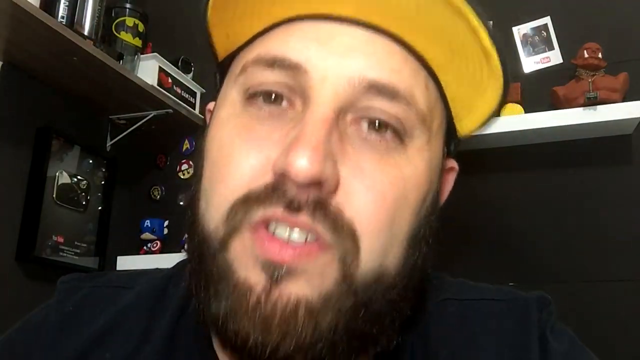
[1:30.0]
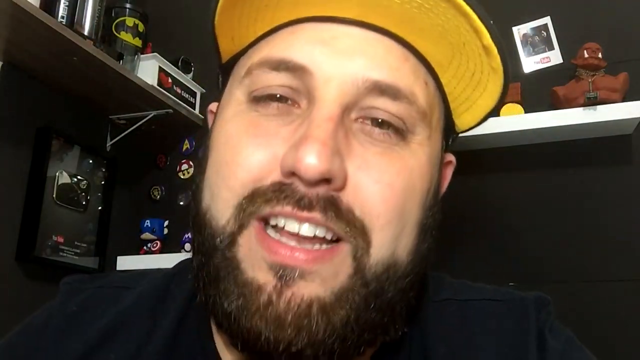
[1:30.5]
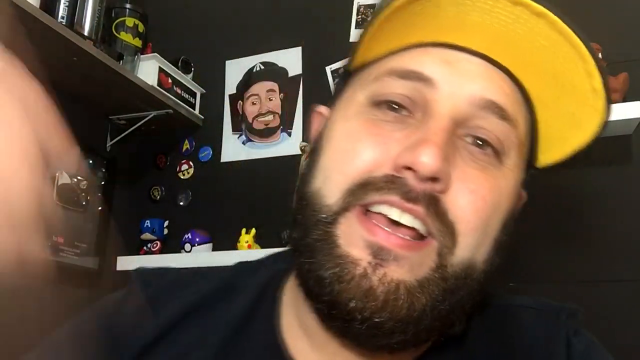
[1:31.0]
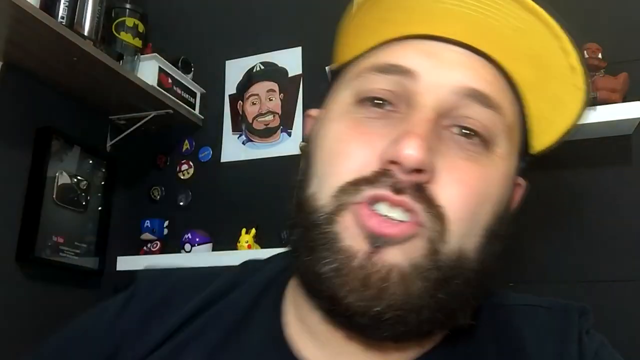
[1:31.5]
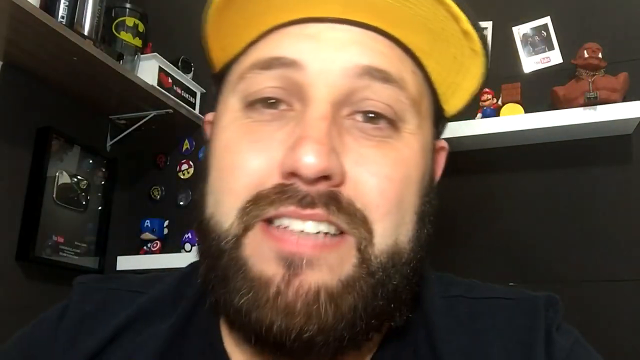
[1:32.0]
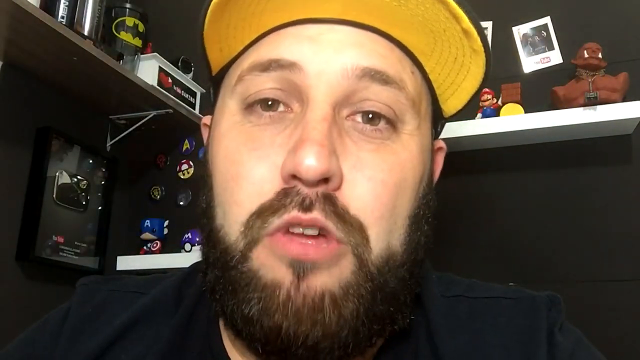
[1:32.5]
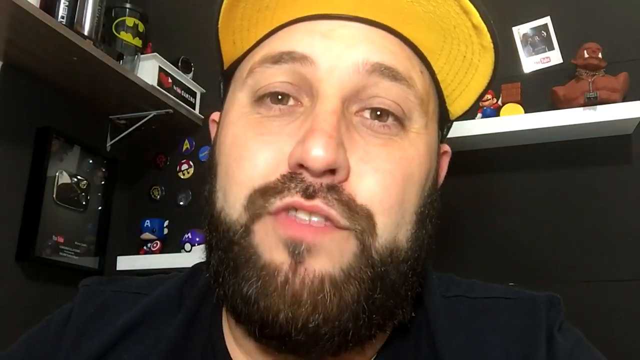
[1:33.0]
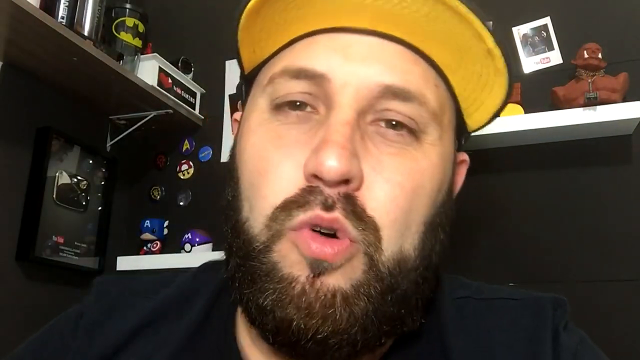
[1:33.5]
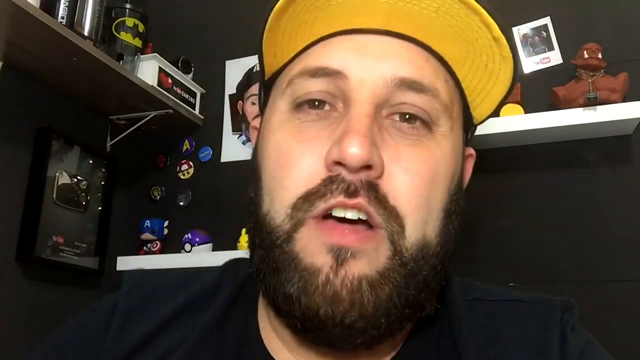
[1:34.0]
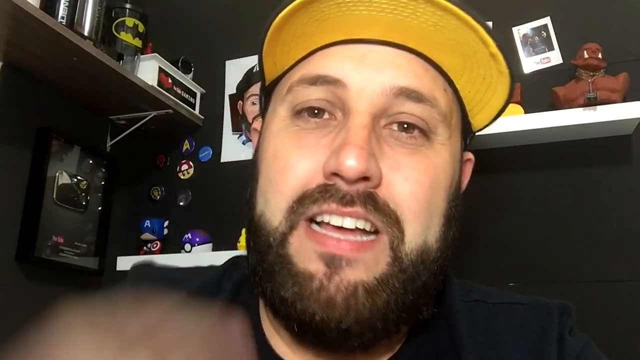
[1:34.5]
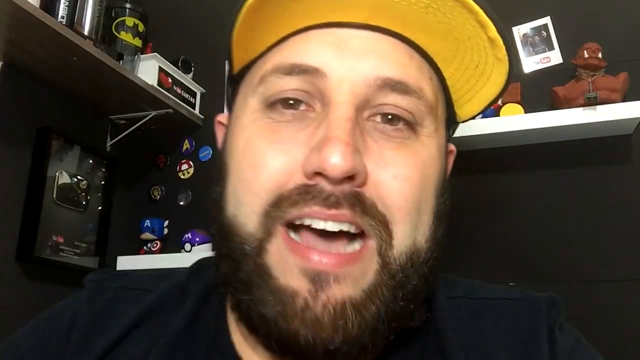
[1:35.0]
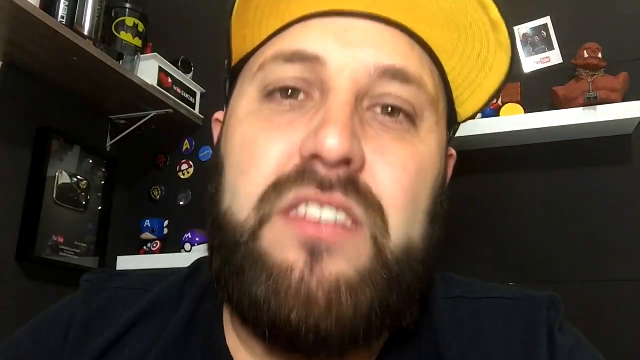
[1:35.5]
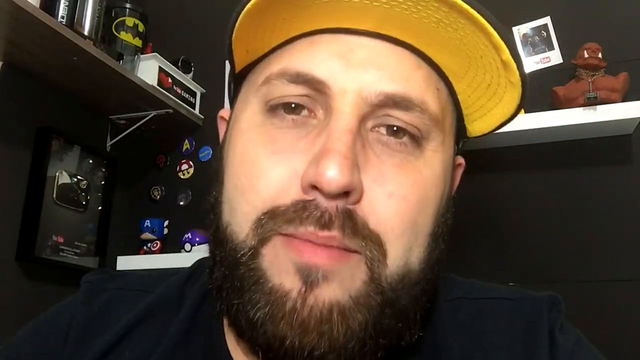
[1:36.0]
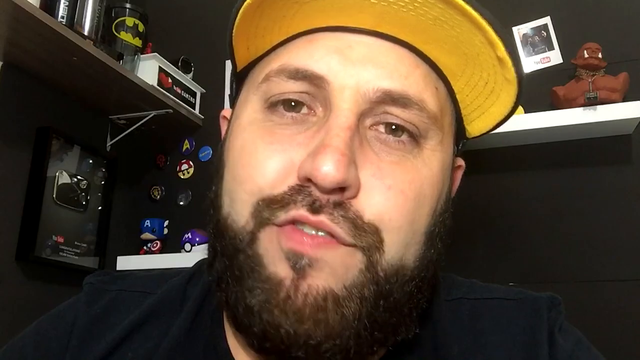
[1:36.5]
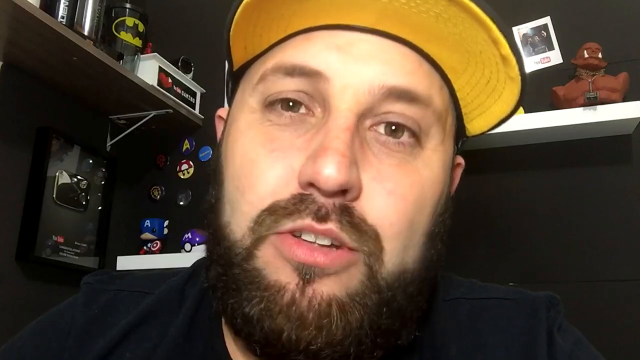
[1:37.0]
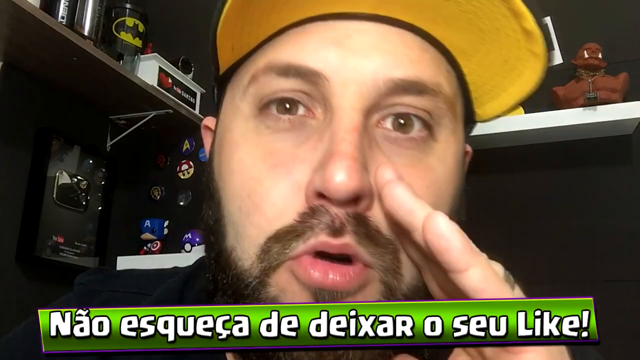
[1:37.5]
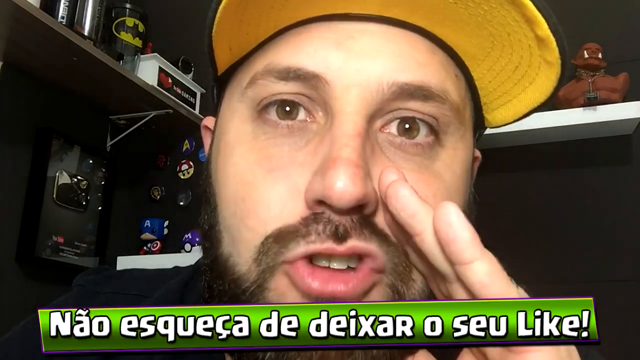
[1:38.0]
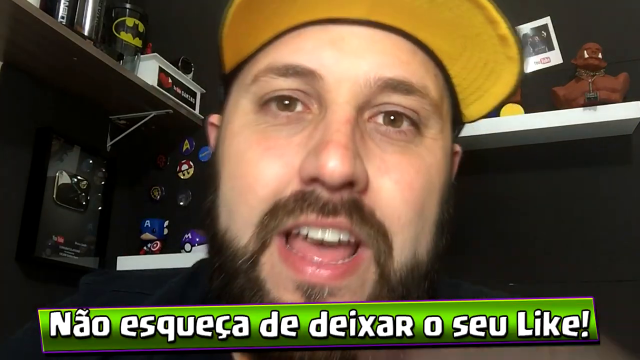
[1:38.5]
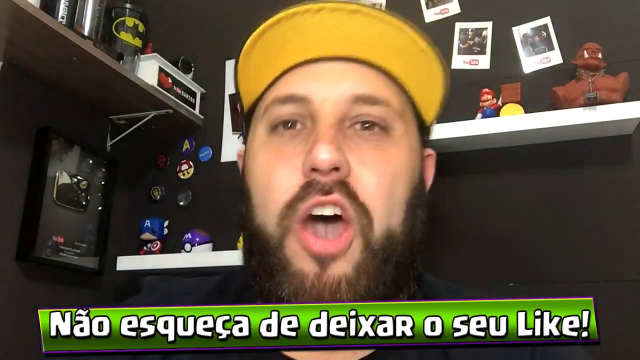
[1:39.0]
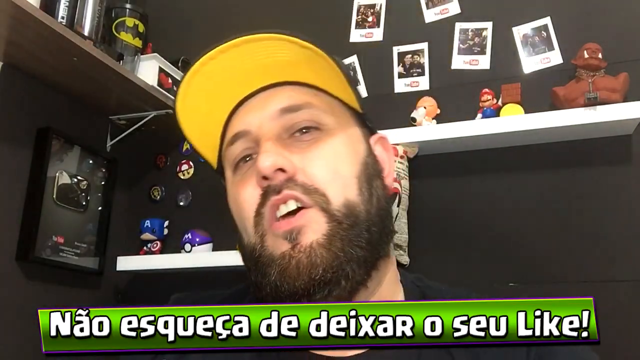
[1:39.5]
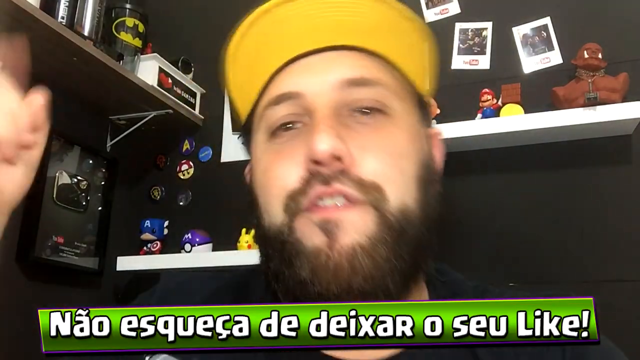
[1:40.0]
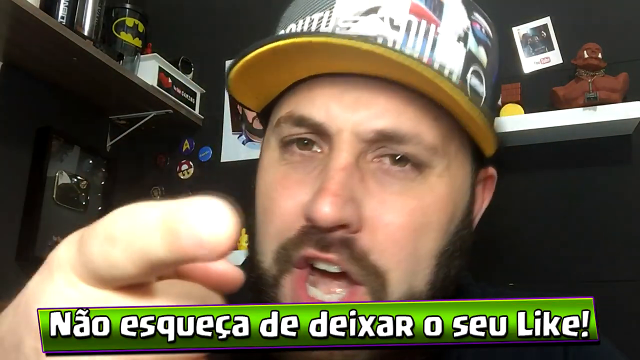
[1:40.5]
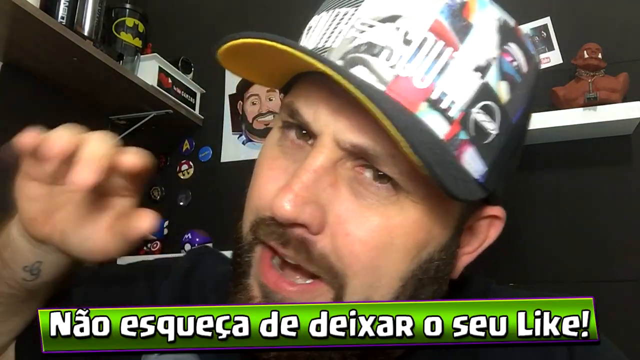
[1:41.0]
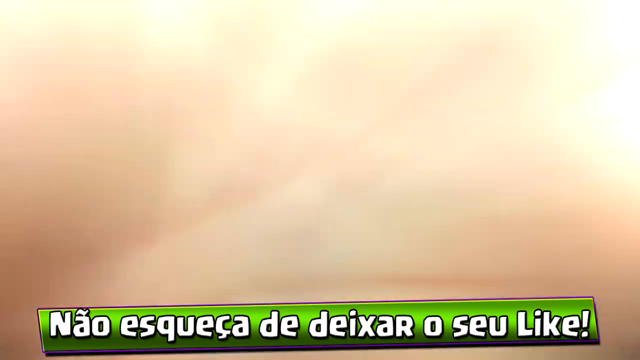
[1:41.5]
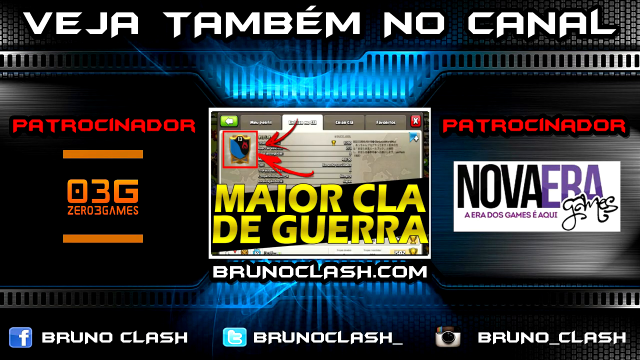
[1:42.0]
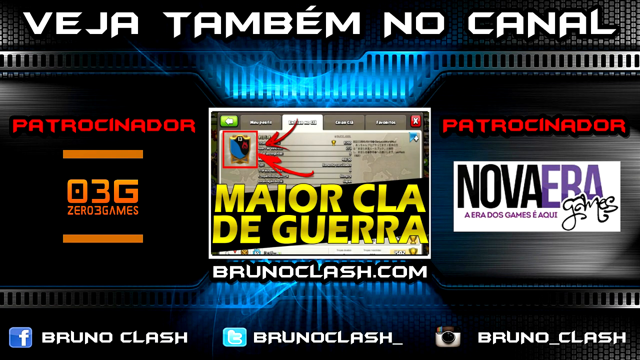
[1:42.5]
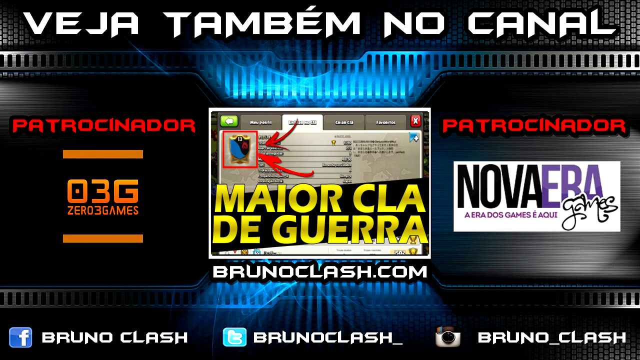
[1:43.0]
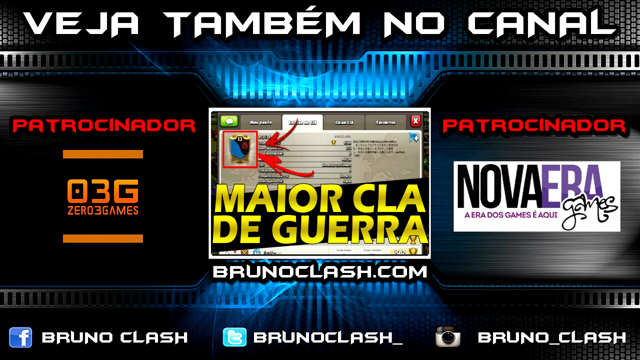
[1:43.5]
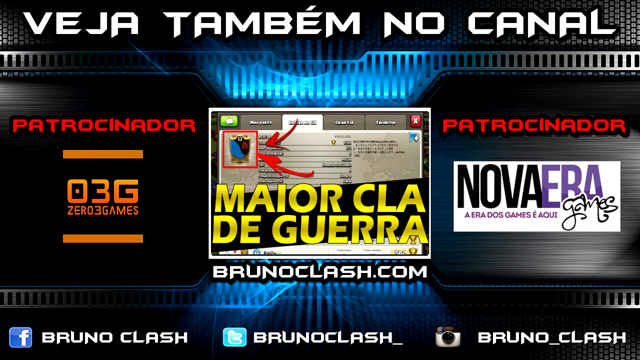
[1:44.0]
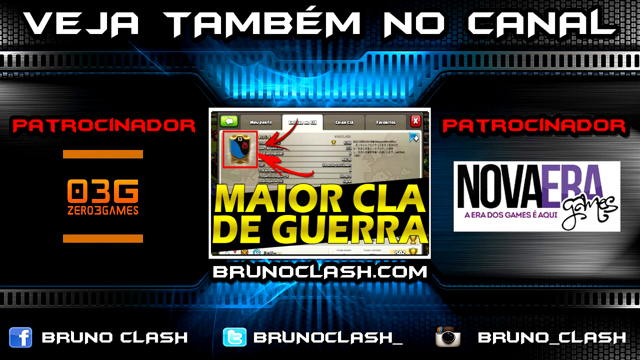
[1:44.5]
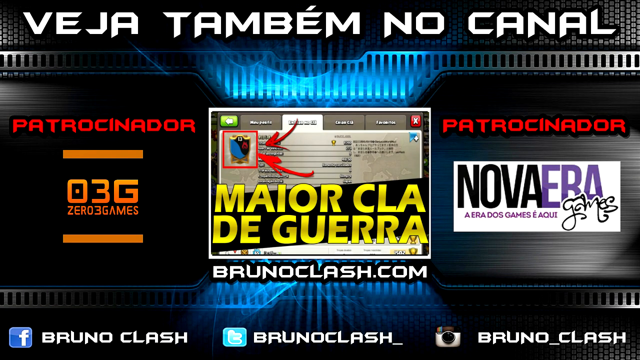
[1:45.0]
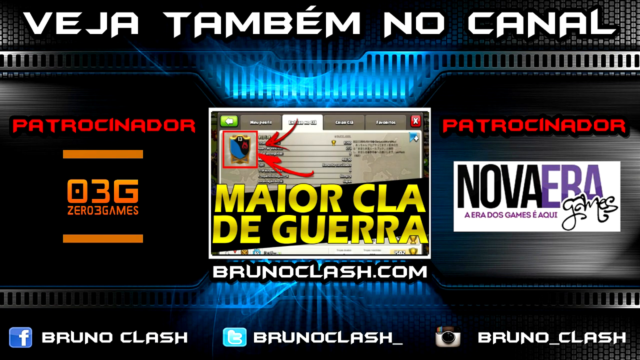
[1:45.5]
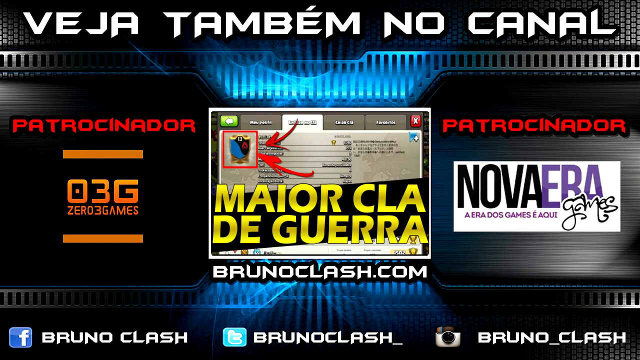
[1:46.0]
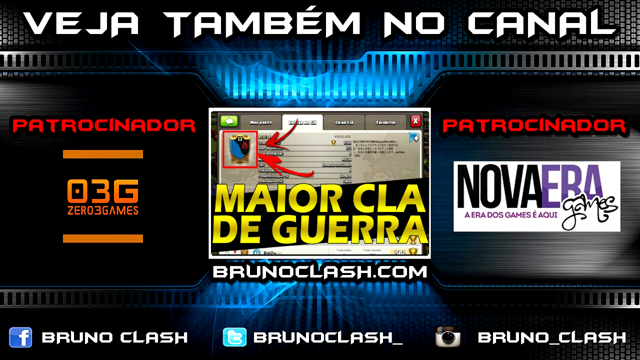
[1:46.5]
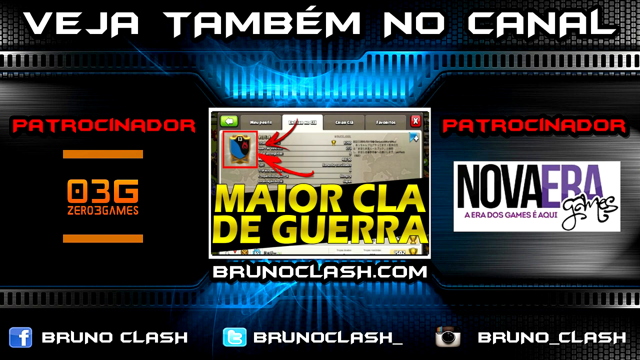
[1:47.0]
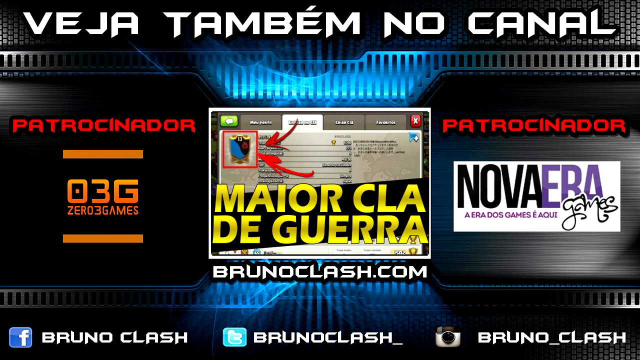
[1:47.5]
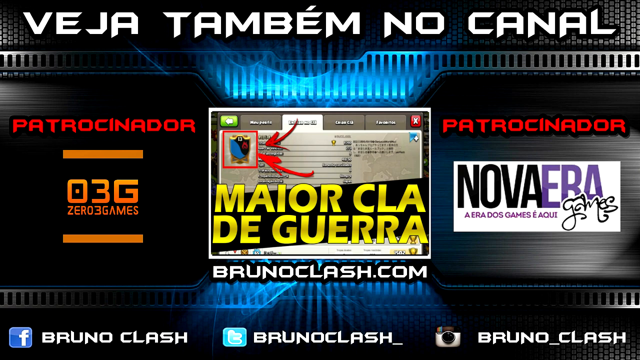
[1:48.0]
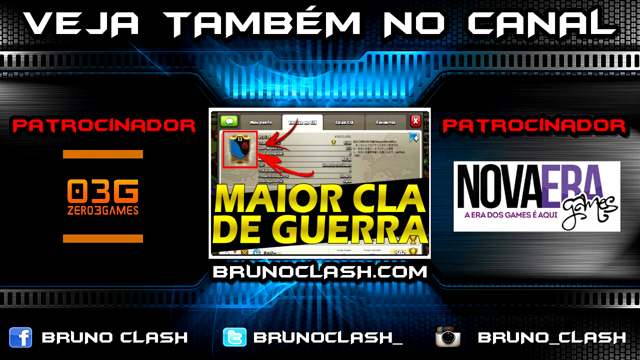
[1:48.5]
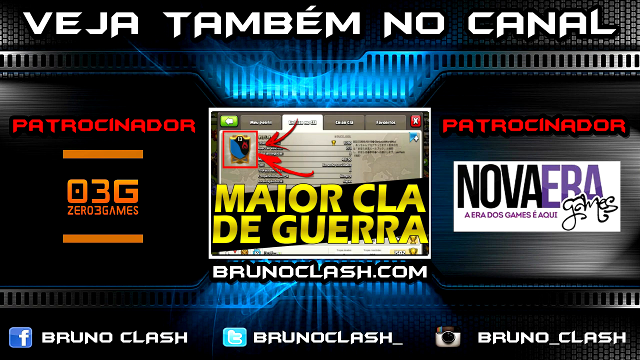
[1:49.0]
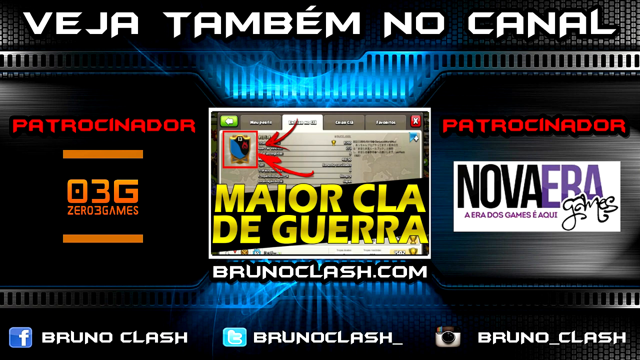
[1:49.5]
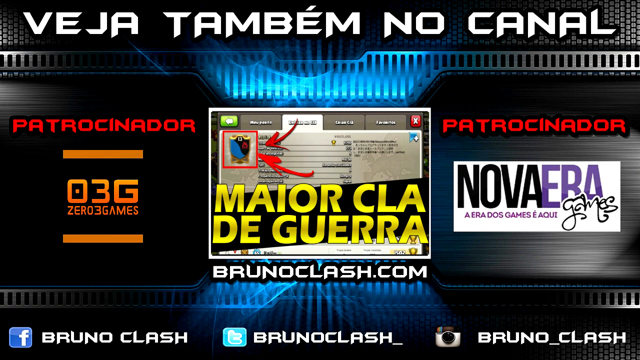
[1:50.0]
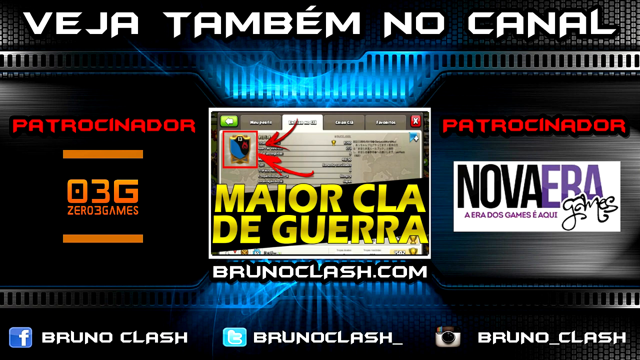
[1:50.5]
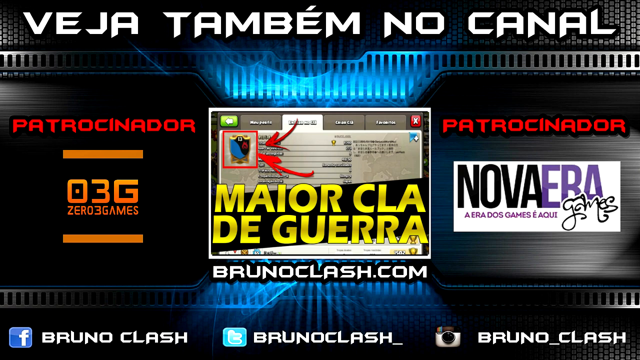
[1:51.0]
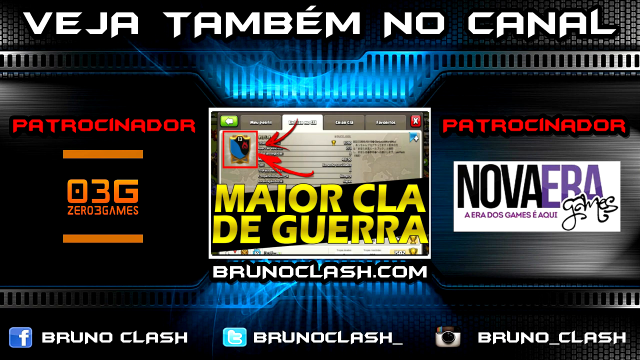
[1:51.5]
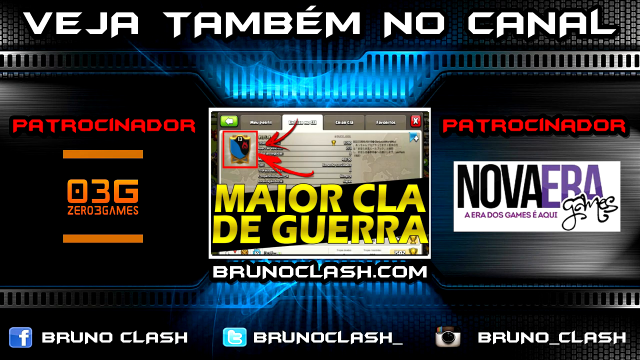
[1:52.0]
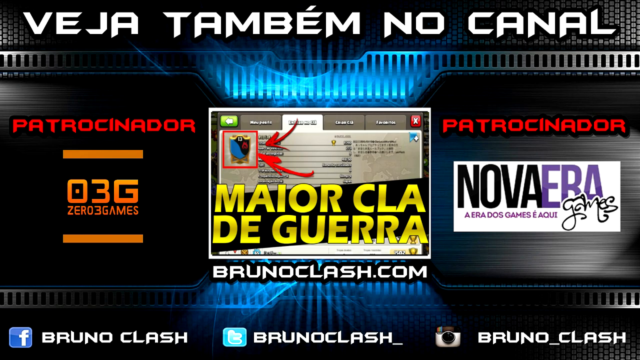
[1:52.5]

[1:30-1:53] The man talks into the camera in an animated way, repeatedly pointing his finger at it. A small green and white graphic comes up at the bottom. He then moves the palm of his hand toward the camera, creating a transition to the next screen, which appears to be in Spanish. This screen has a lot of text, including "03games", "brunoclash.com", "Nova Era", "Patrocinador", and at the very top "Veja Tambim no Canal". Behind the text is a metallic-looking graphic with a blue glow in the middle section.